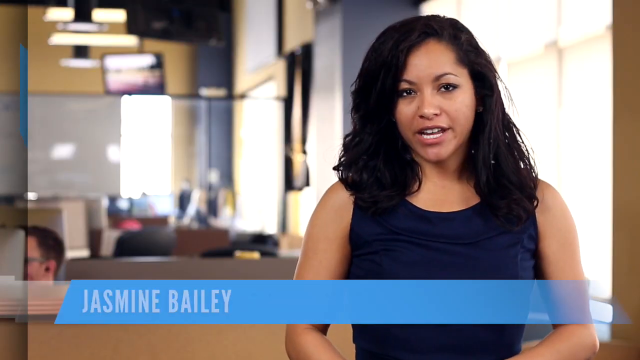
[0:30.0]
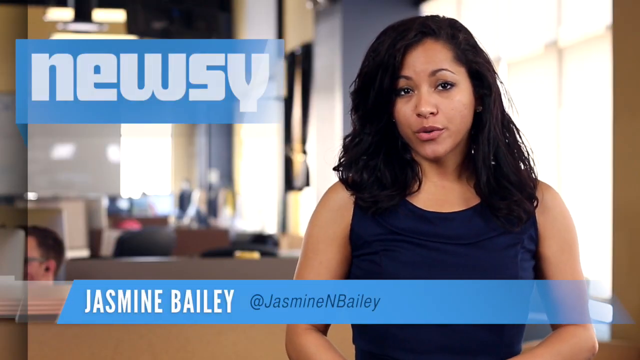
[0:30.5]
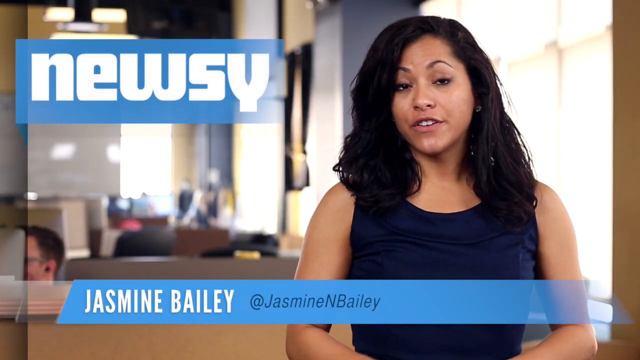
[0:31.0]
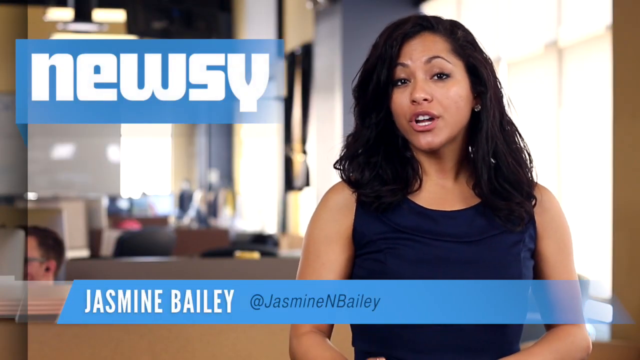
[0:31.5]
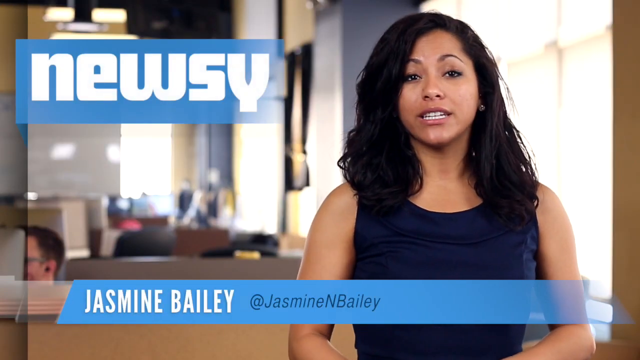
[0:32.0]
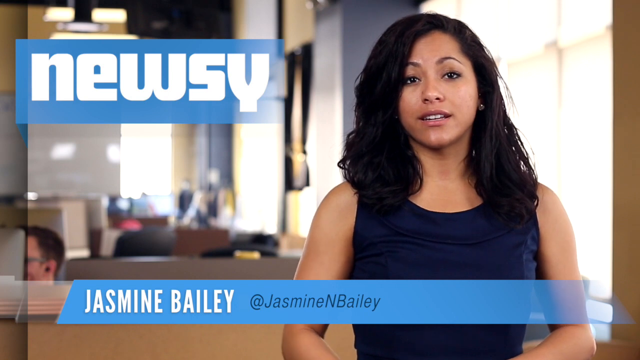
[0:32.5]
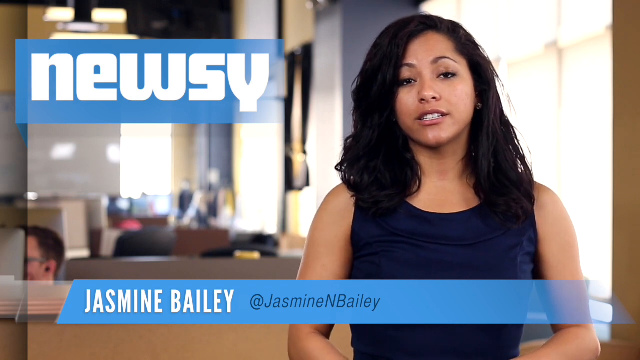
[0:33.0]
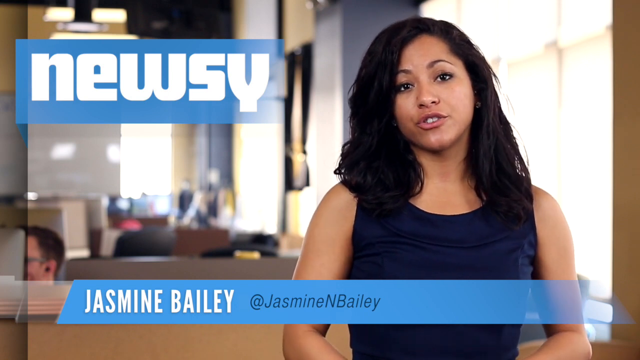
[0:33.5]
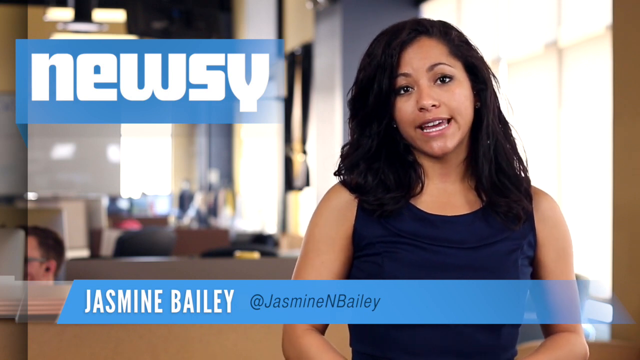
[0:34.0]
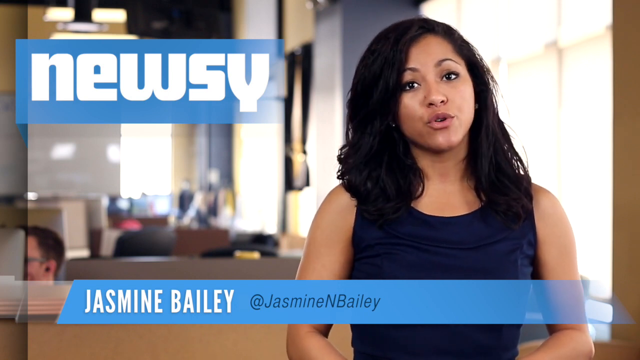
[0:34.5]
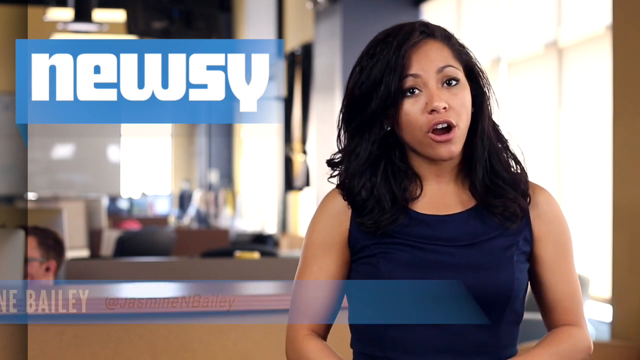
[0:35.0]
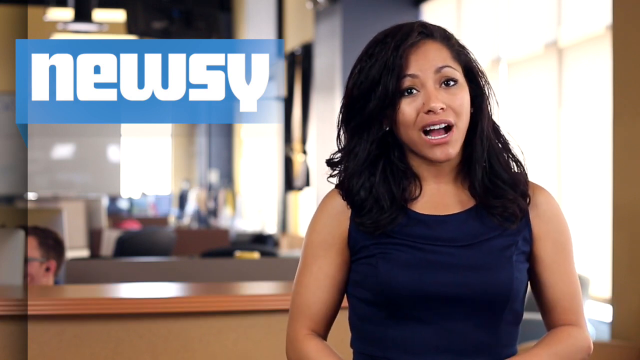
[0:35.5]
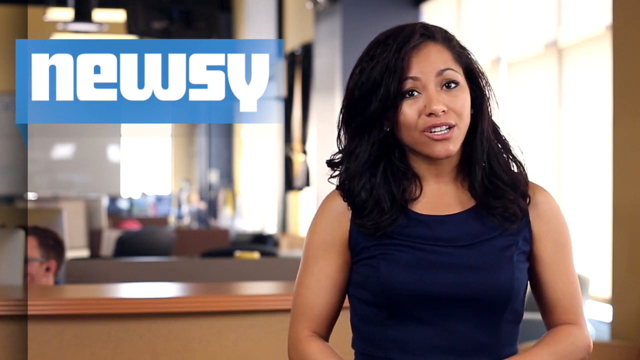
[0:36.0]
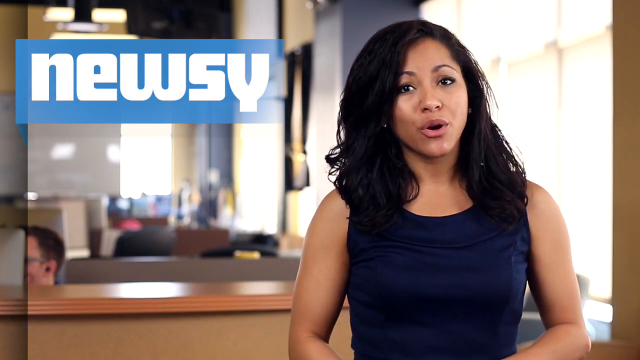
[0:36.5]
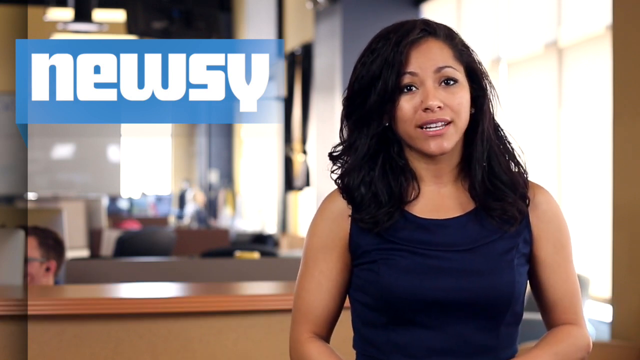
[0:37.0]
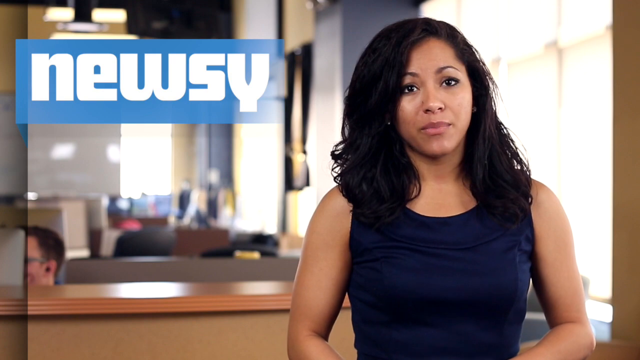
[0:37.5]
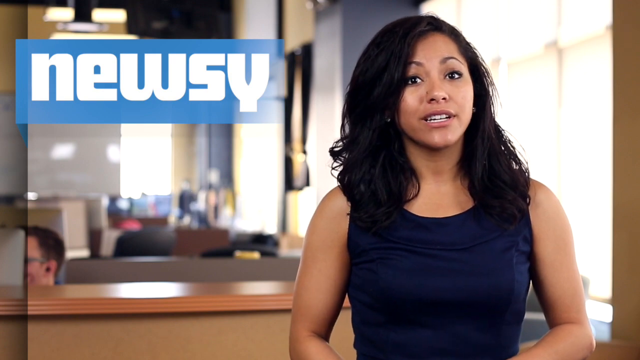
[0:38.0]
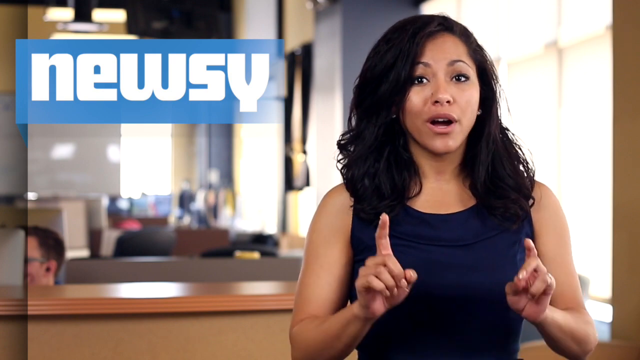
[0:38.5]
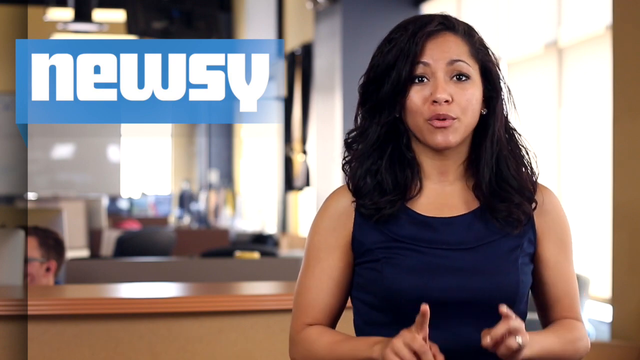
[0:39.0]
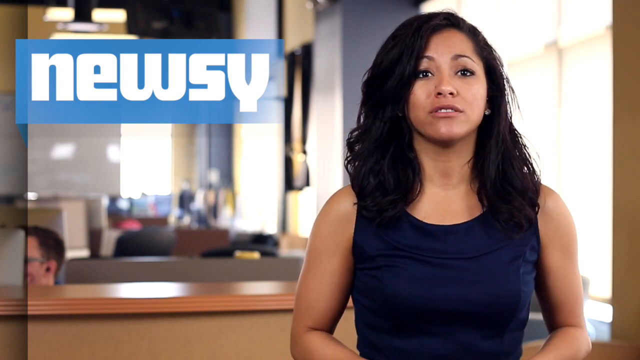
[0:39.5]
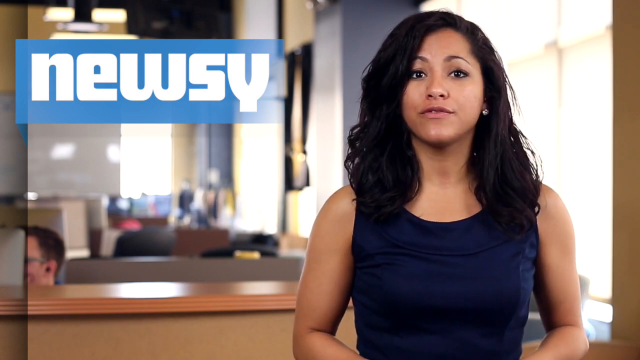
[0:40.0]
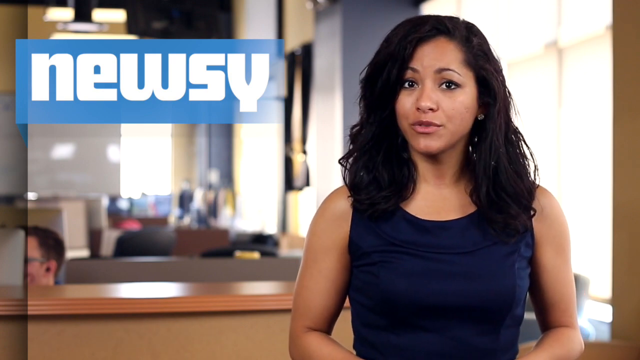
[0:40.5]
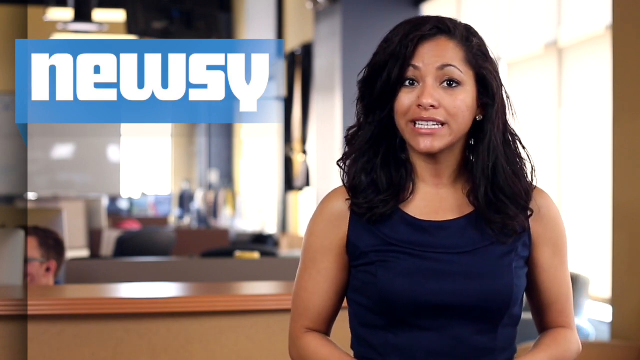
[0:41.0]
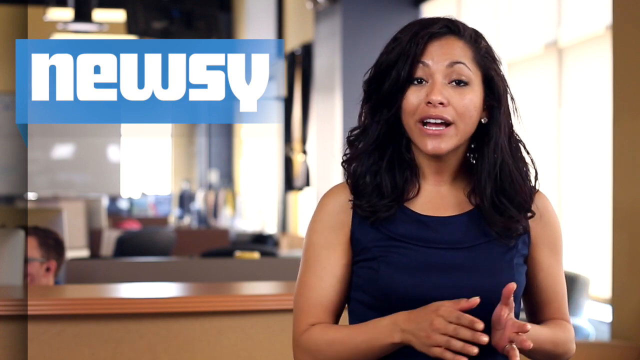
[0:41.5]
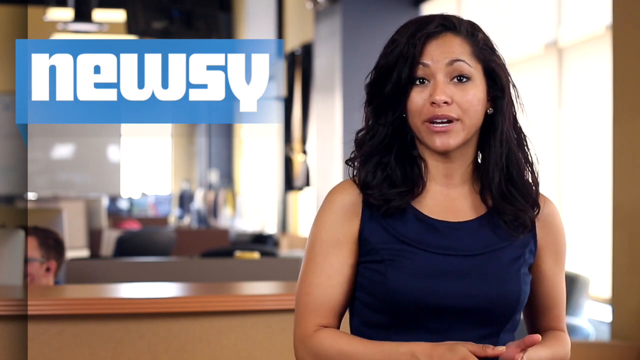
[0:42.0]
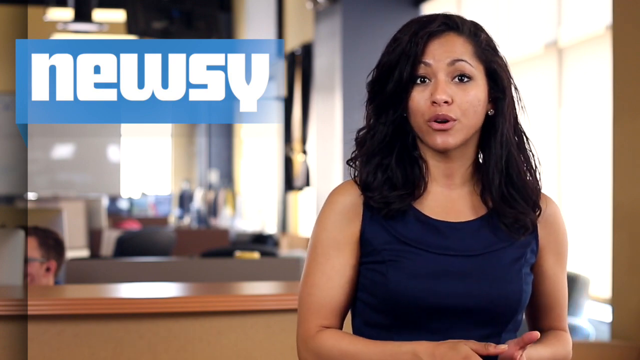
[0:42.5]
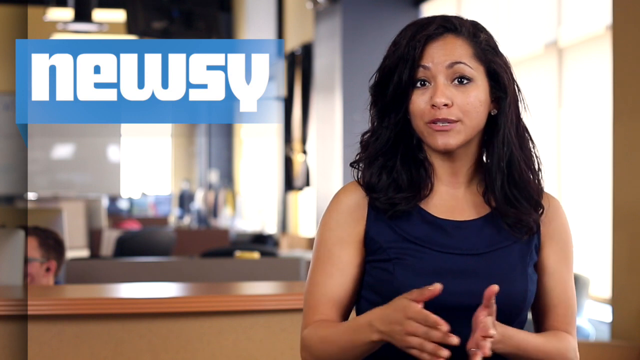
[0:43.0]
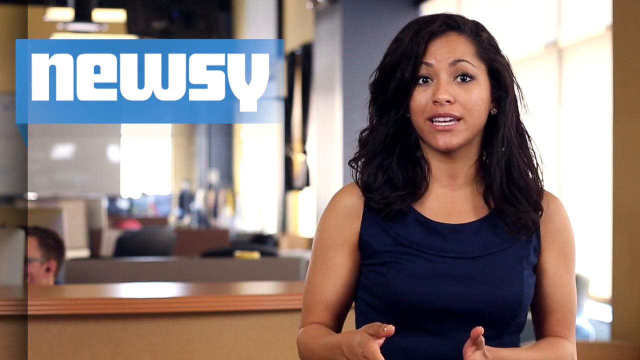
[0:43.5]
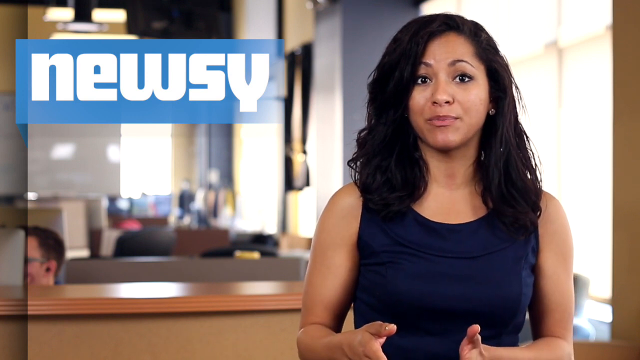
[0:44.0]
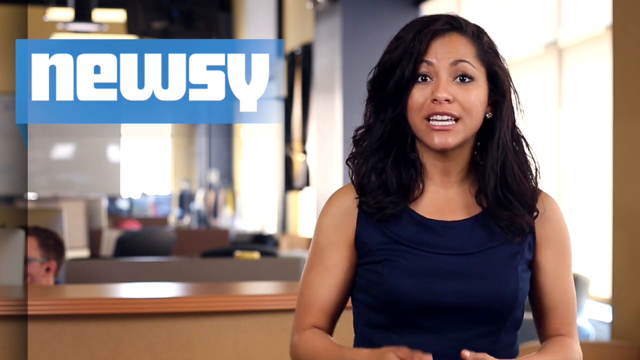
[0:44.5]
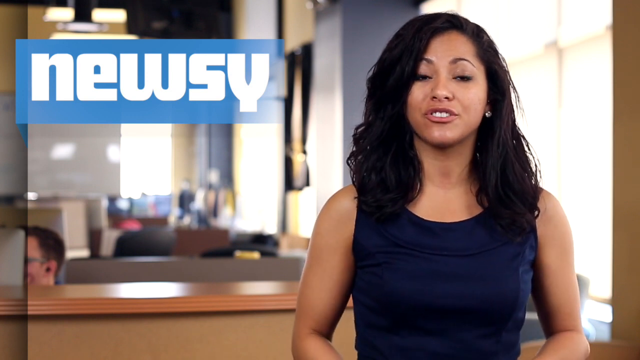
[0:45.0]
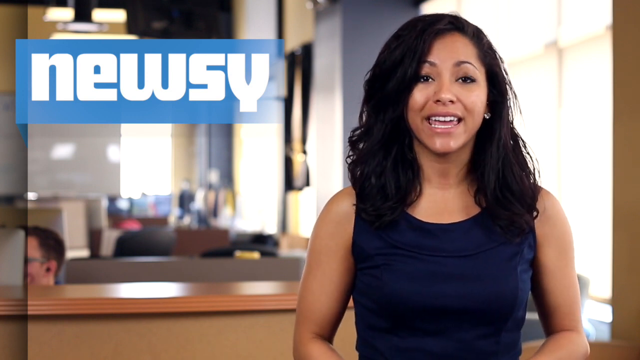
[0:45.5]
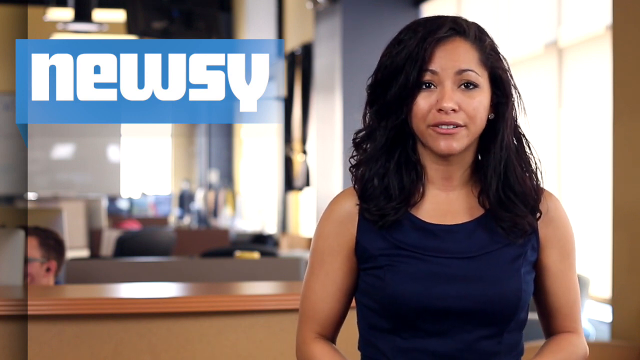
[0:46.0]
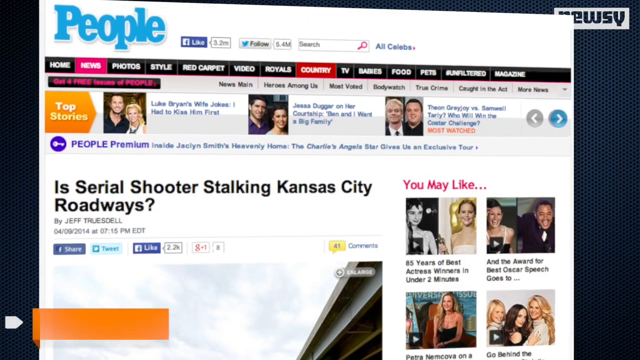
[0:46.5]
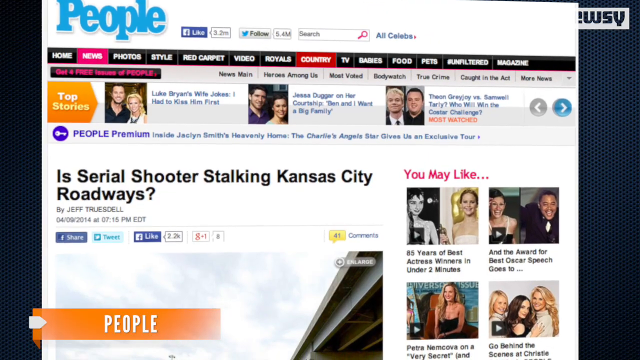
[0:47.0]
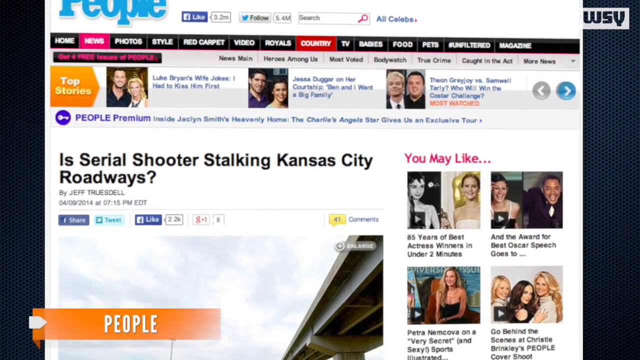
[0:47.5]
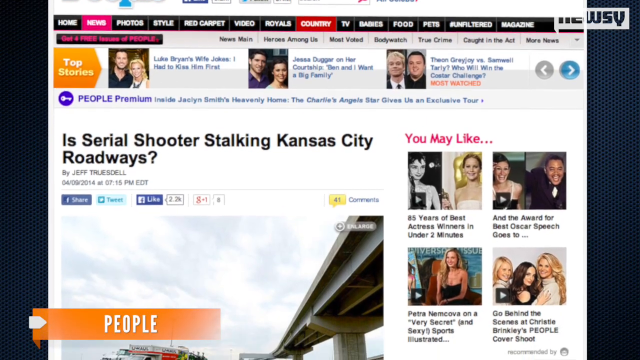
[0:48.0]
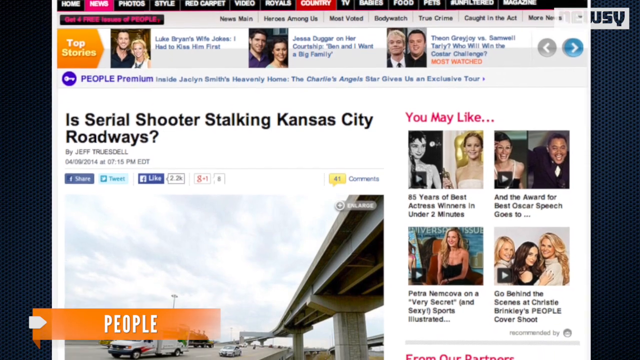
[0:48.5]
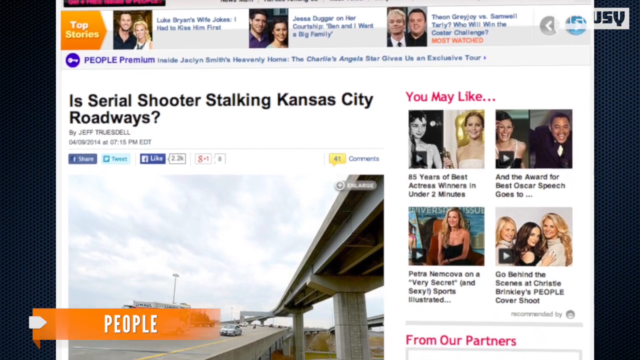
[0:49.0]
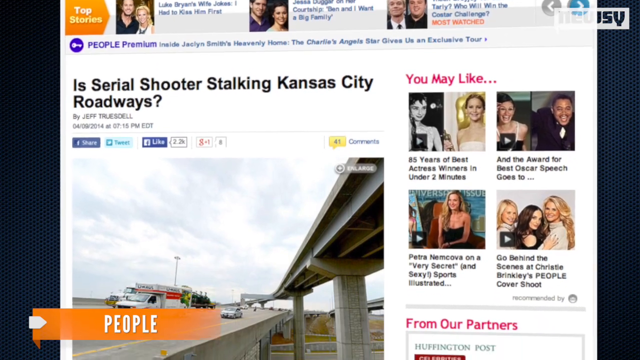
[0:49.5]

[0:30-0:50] The Newsy broadcast about at least a dozen linked highway shootings continues. The scene moves to the newsroom, where news anchor Jasmine Bailey, wearing a blue dress, is on the right side of the screen. Behind her, people sit in office chairs working, while some seats and office chairs are empty. An article is then shown with the headline "Is serial shooter stalking Kansas City roadways," followed by pictures of people at work and a picture of a highway.